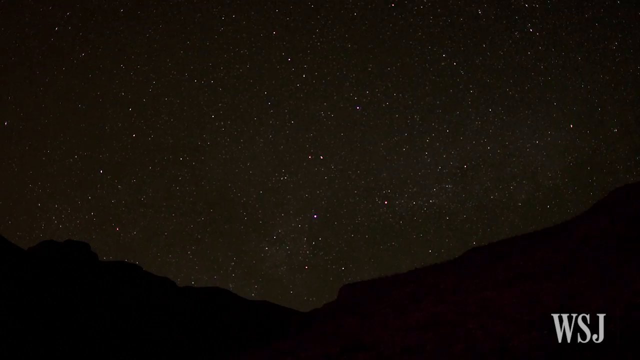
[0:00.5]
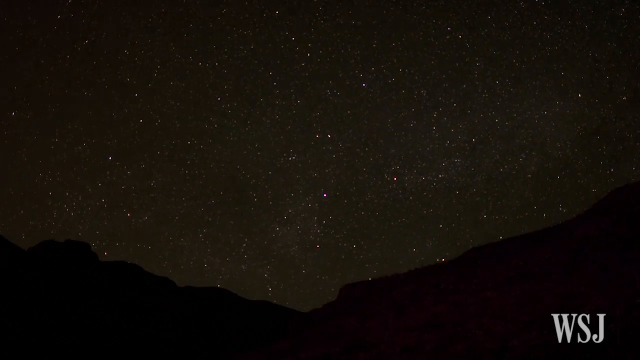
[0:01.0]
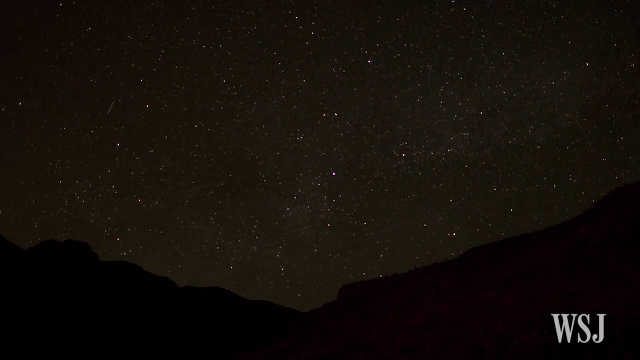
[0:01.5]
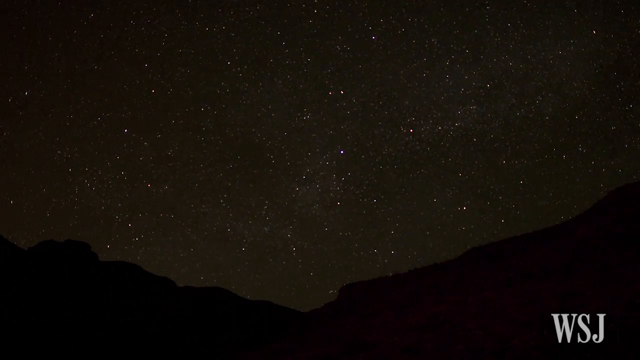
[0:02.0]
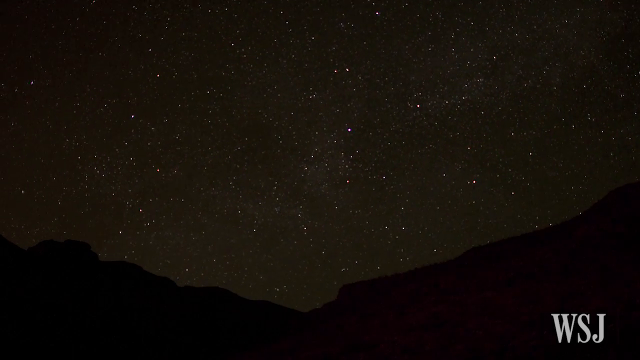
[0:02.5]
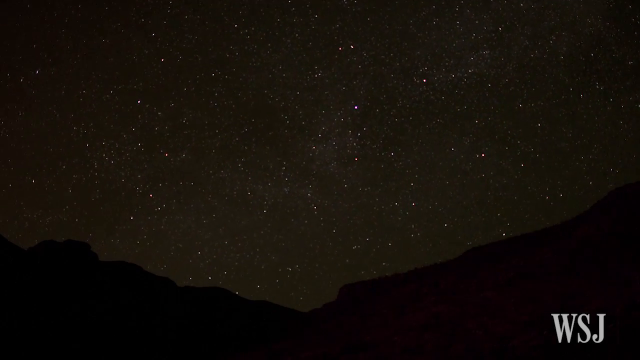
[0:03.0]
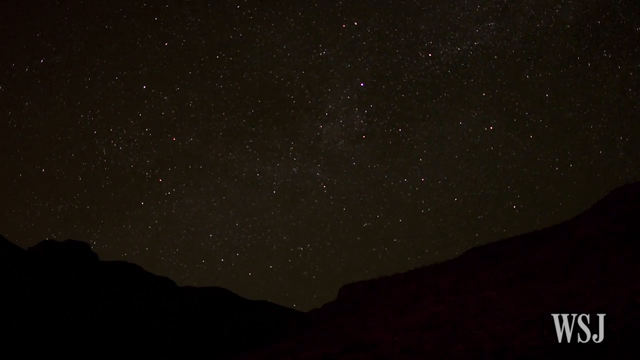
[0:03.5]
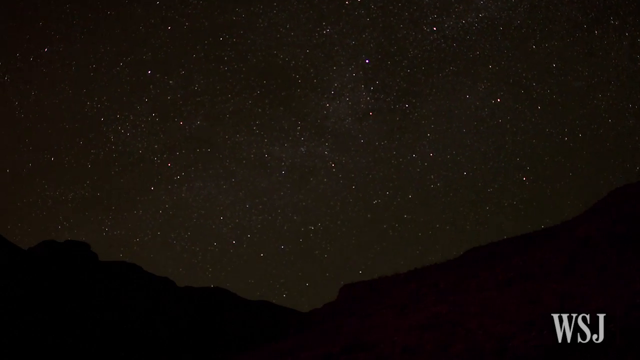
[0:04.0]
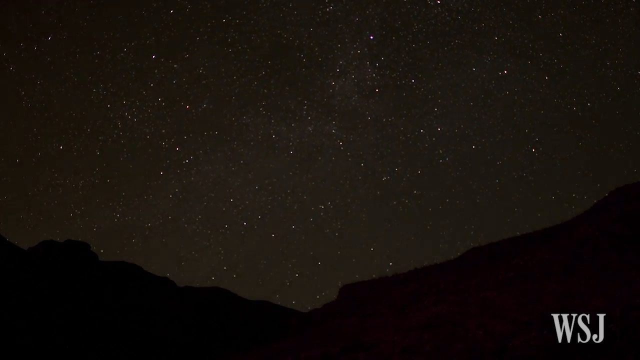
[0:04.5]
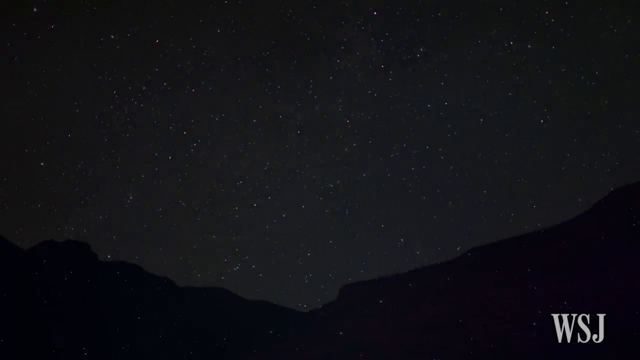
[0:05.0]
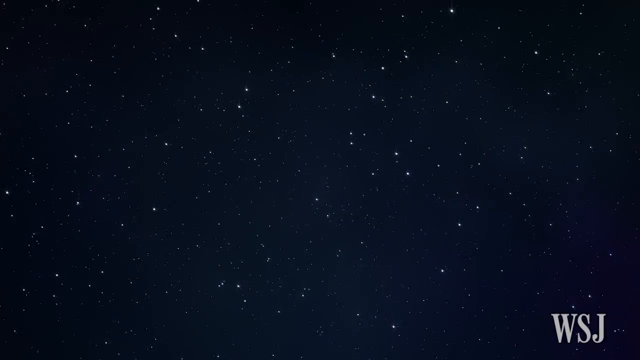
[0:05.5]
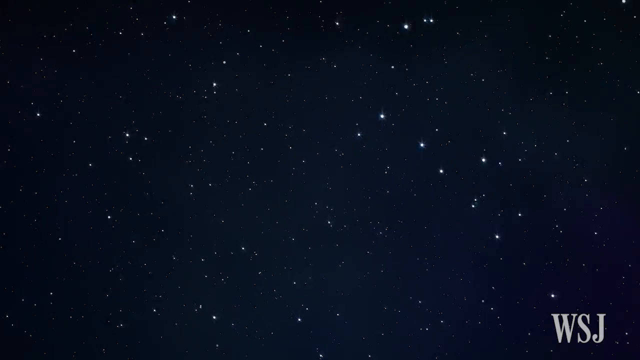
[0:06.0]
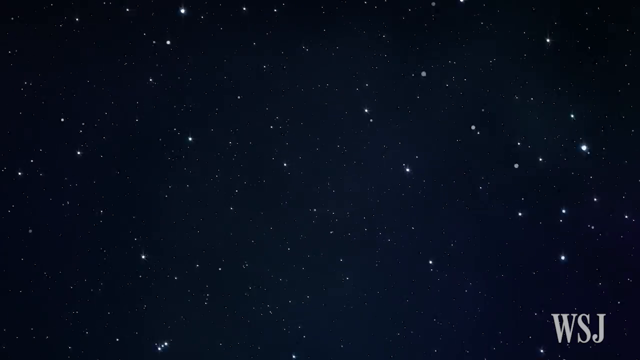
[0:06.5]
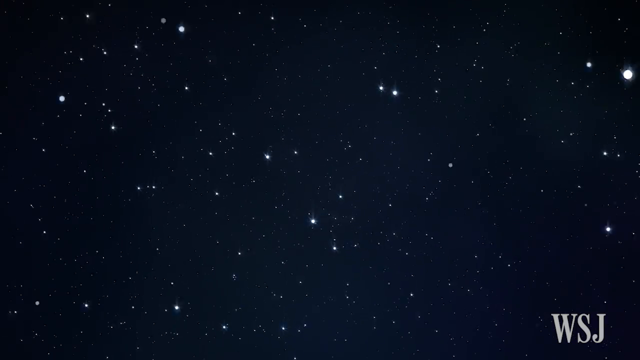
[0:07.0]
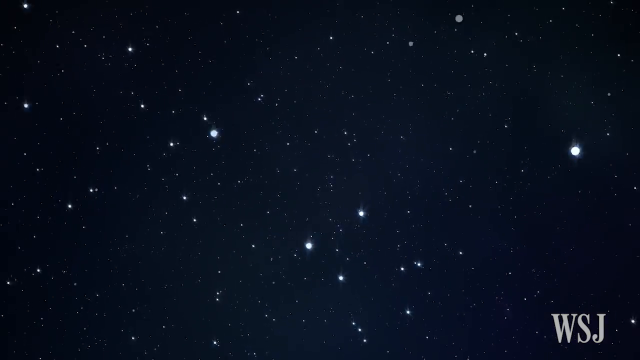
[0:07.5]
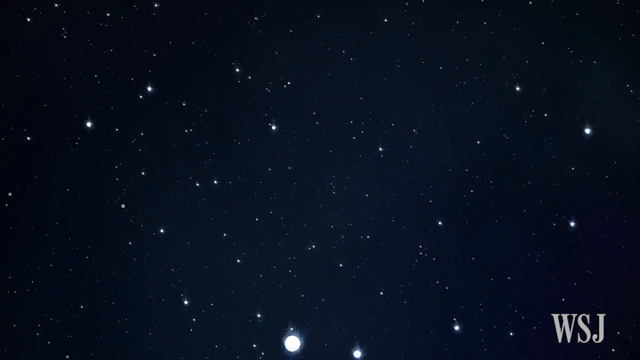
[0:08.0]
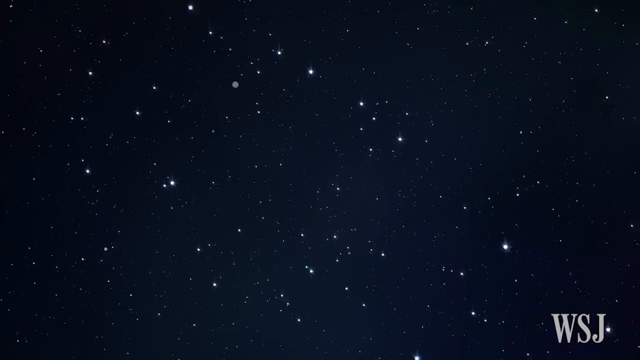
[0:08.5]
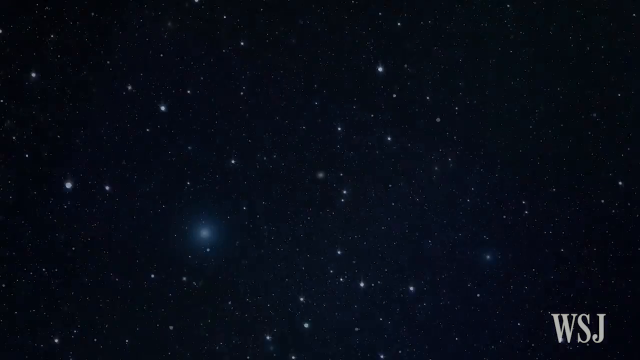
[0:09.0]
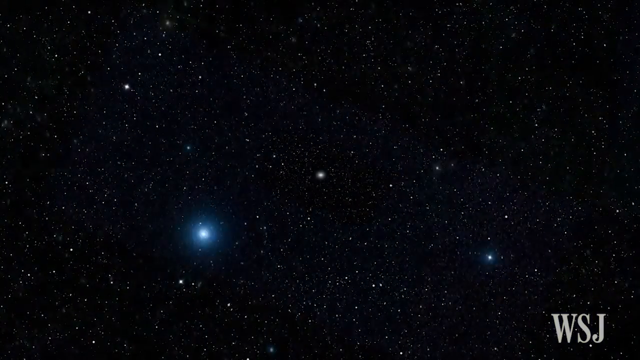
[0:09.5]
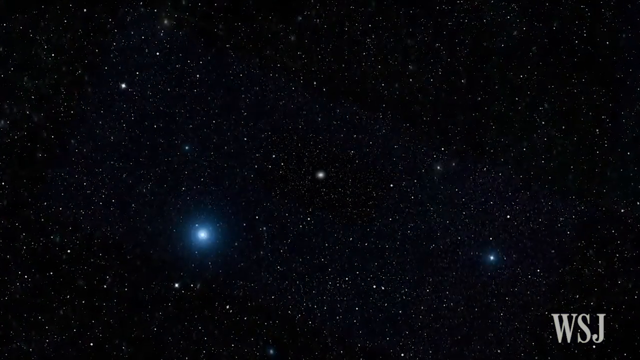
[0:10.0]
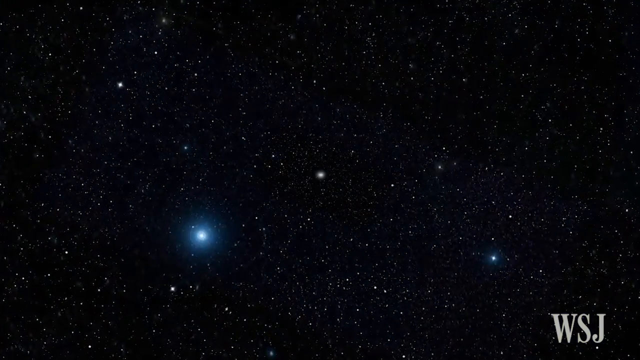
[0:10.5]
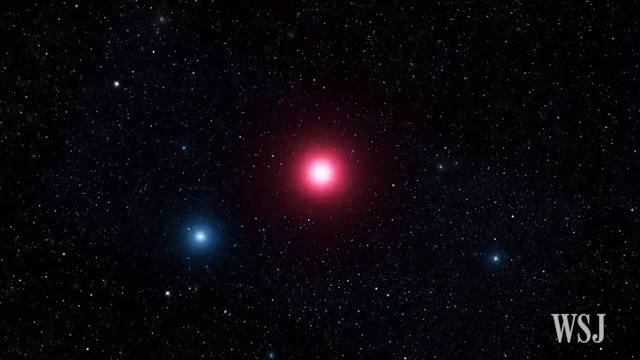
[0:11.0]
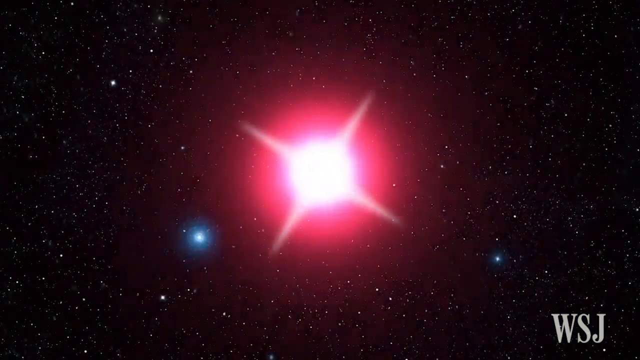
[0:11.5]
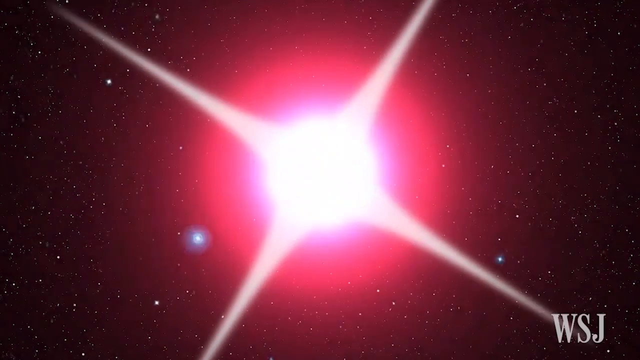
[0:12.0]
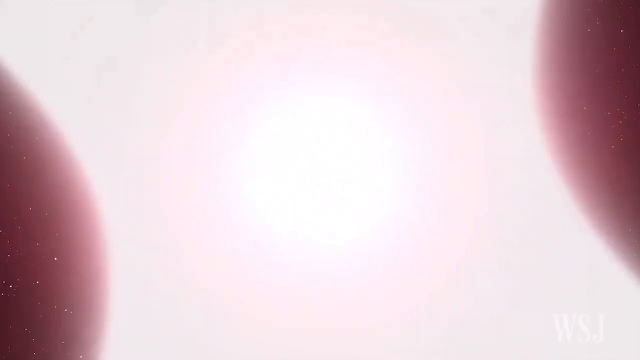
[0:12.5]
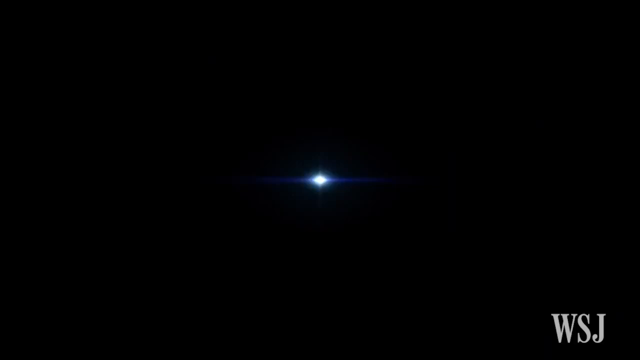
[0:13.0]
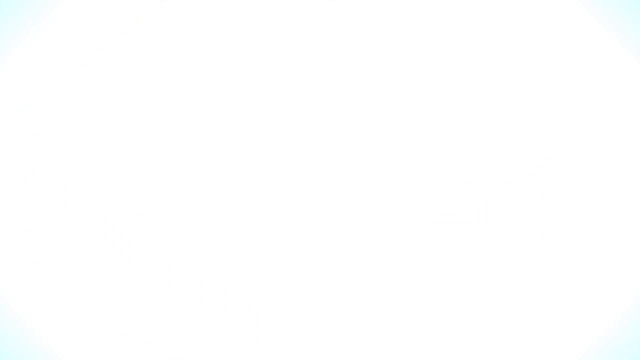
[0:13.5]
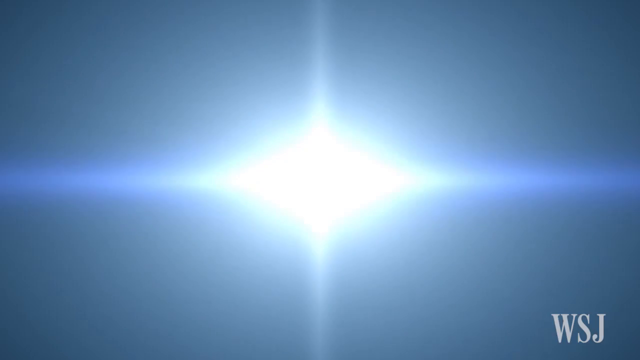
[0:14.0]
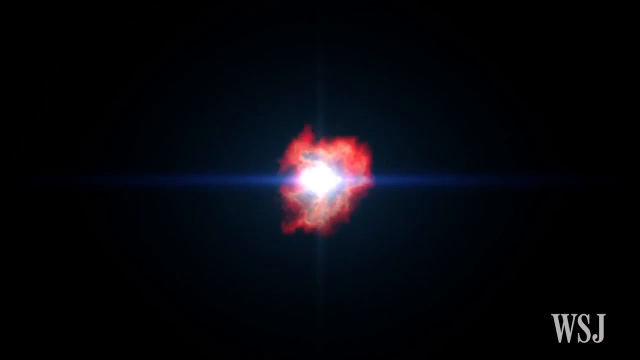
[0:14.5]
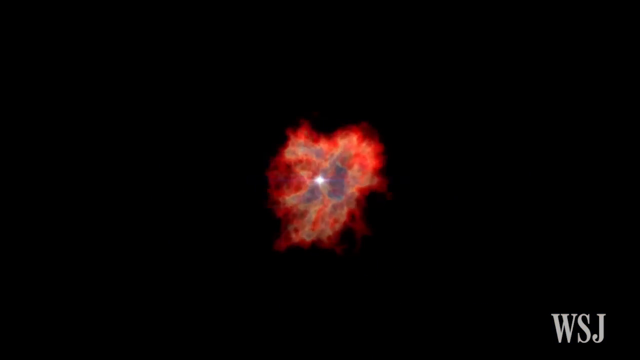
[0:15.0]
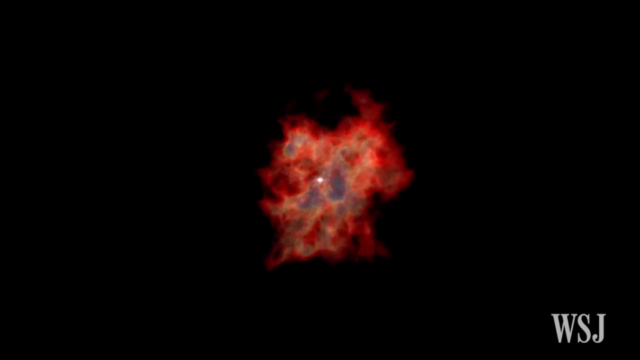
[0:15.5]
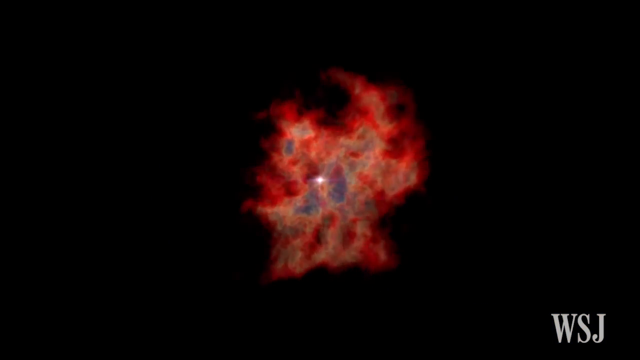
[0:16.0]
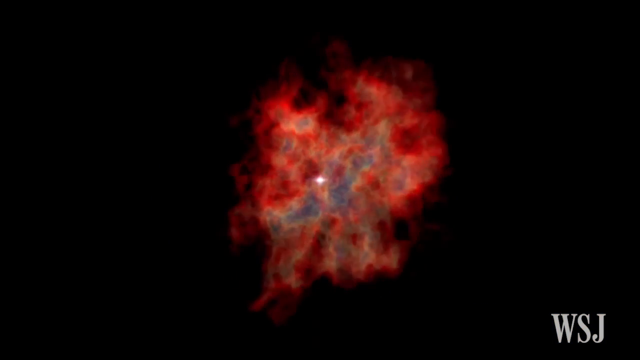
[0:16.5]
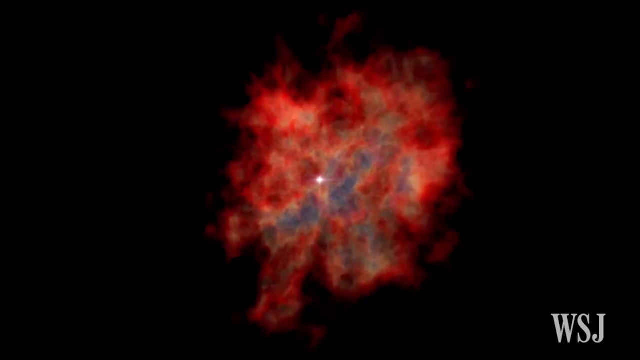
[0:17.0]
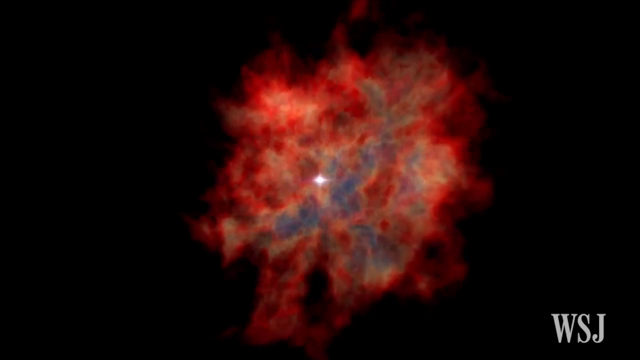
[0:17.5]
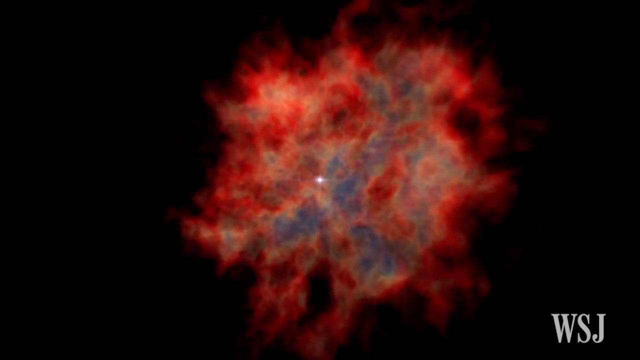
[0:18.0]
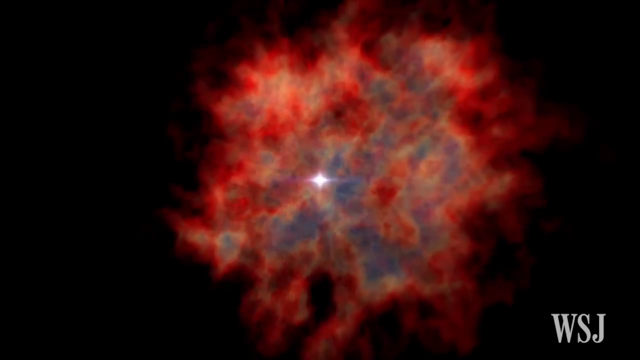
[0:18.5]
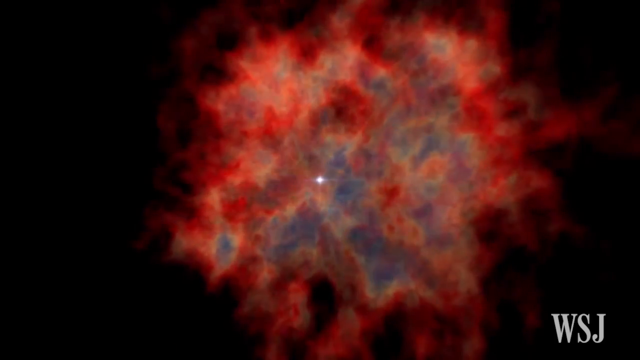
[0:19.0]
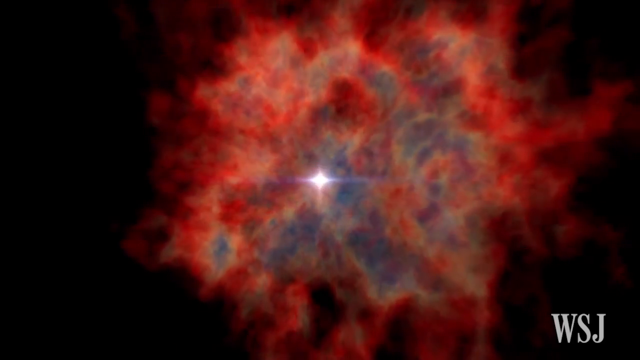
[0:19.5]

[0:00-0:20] The video is by the Wall Street Journal newspaper. It opens on a clear night sky filled with thousands of stars above some hills. The view then moves out into outer space, flying past various stars and other light formations, and seems to head right into the heart of a red star, where the process that creates light and heat is visible. While travelling through space, some stars appear bigger than others. The view gets close to a very large red star that dominates the screen entirely, then swings back to show a sort of central explosive process that slowly spreads across the screen.